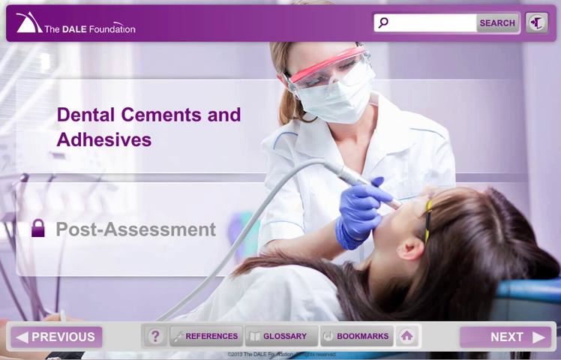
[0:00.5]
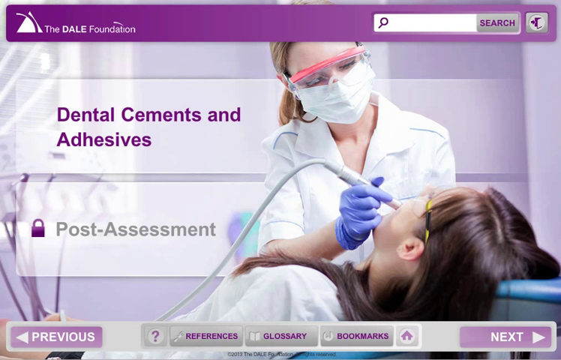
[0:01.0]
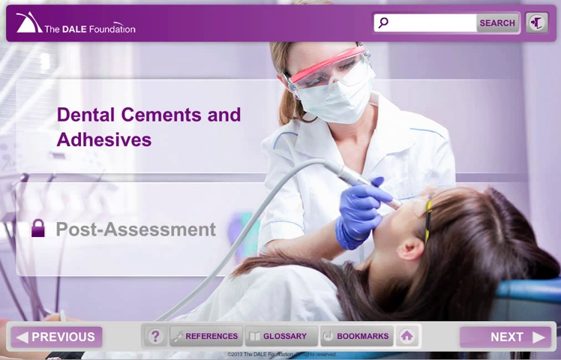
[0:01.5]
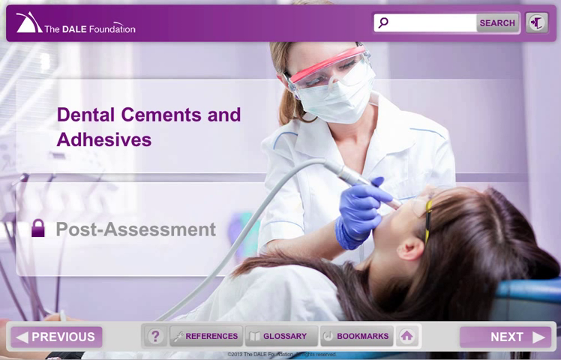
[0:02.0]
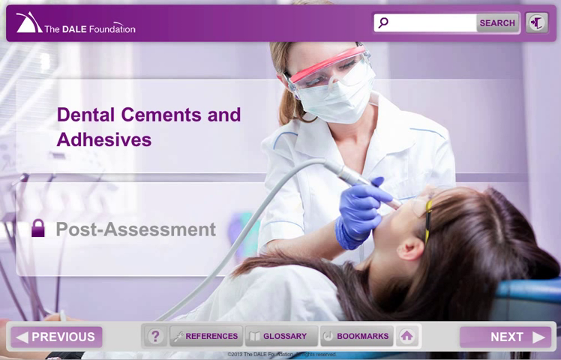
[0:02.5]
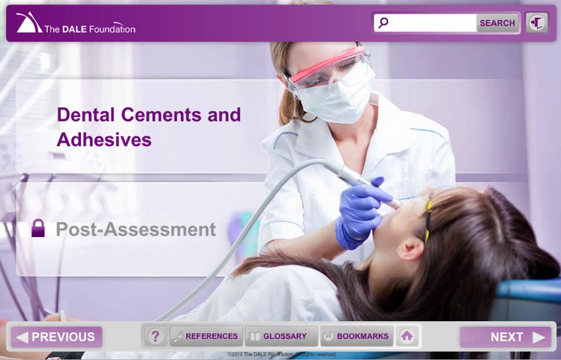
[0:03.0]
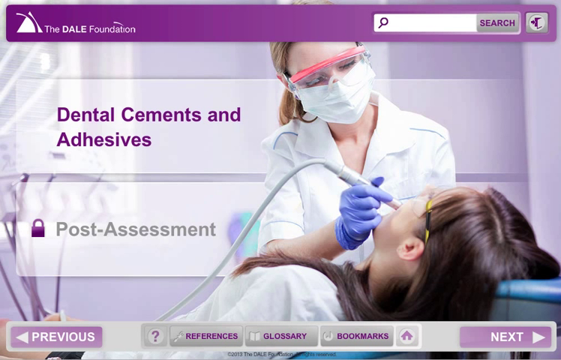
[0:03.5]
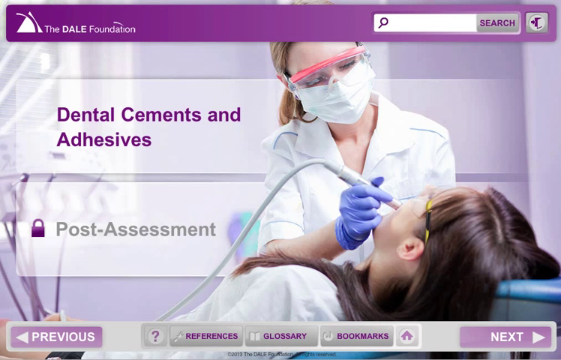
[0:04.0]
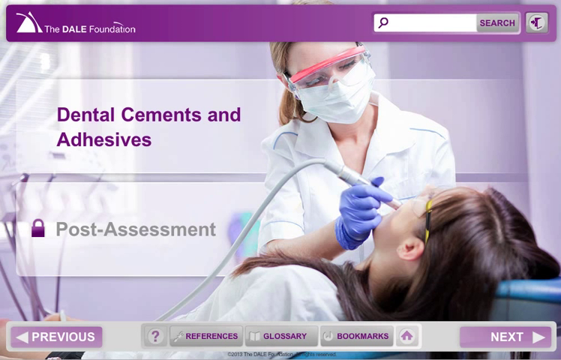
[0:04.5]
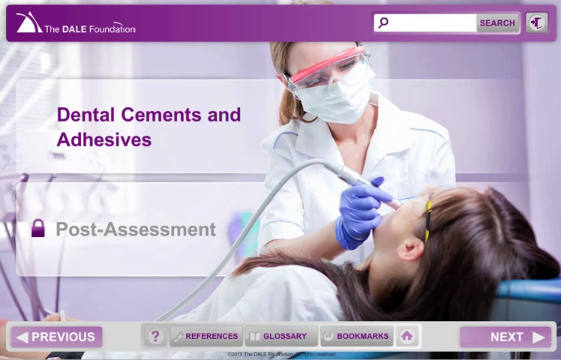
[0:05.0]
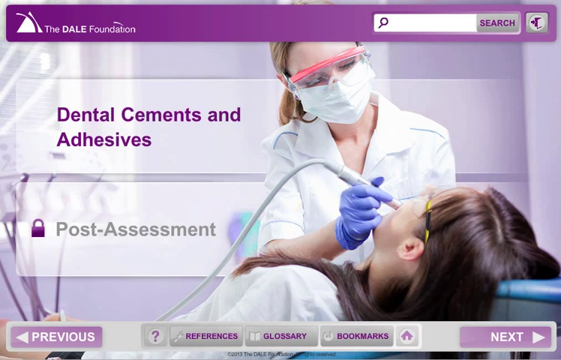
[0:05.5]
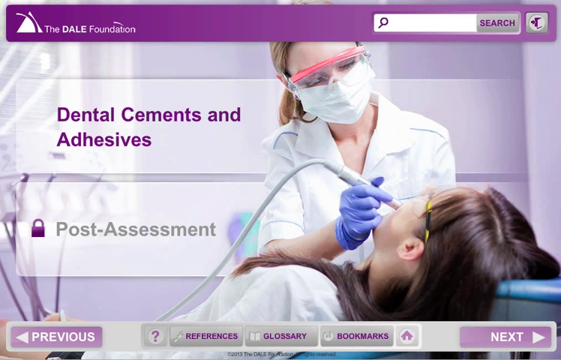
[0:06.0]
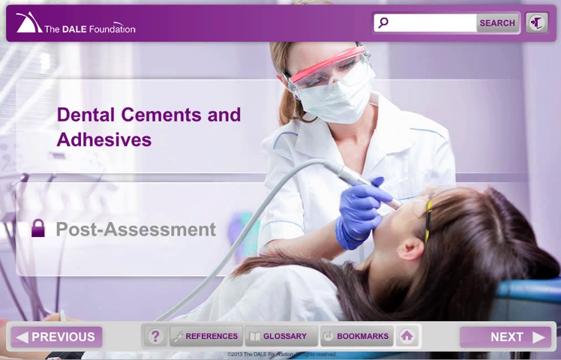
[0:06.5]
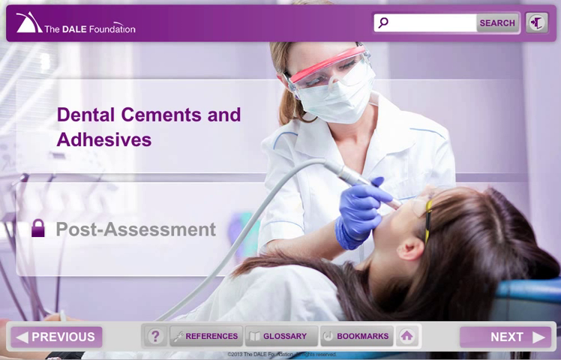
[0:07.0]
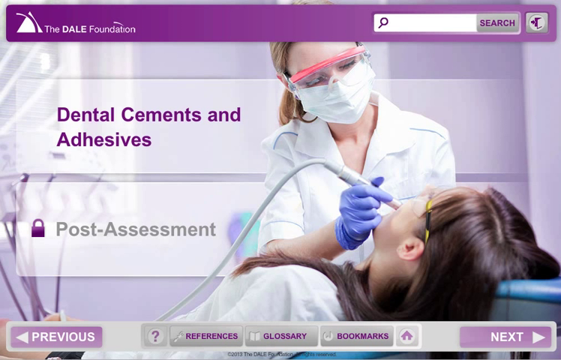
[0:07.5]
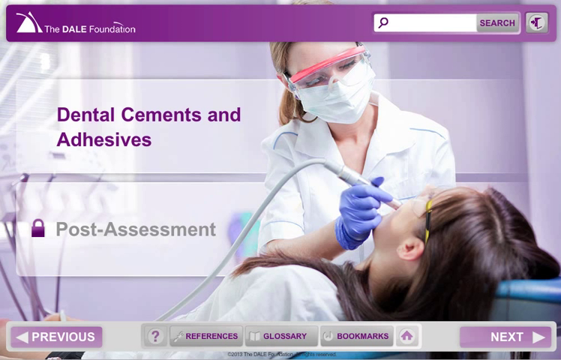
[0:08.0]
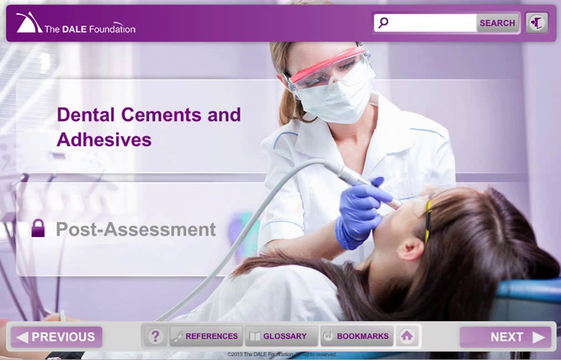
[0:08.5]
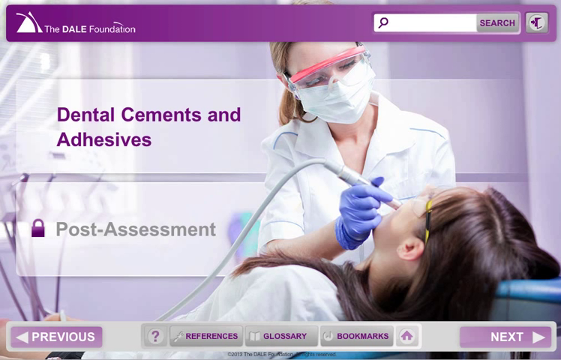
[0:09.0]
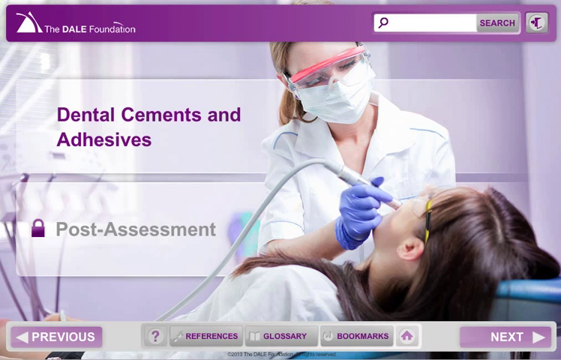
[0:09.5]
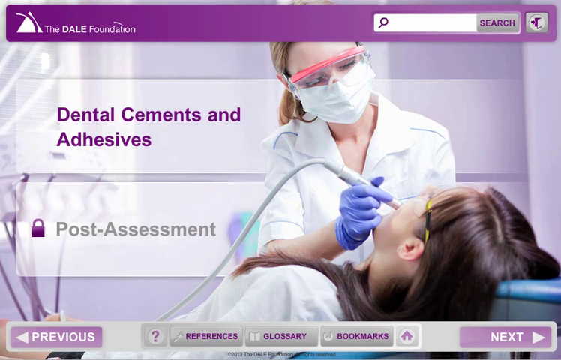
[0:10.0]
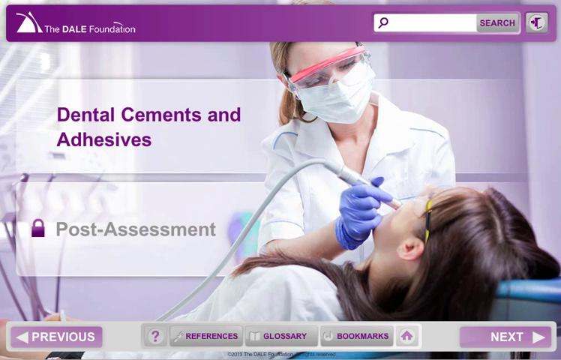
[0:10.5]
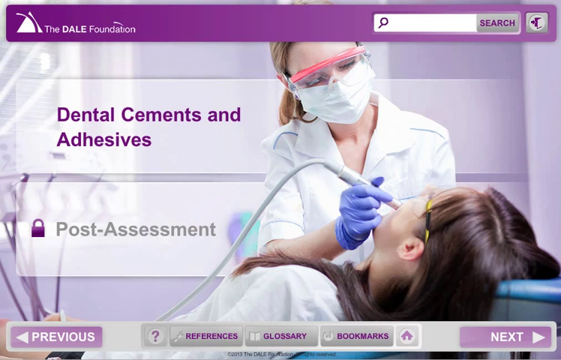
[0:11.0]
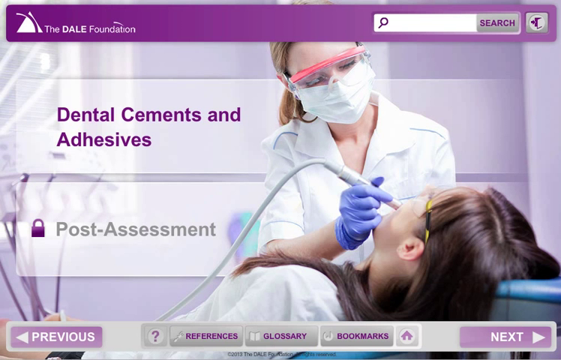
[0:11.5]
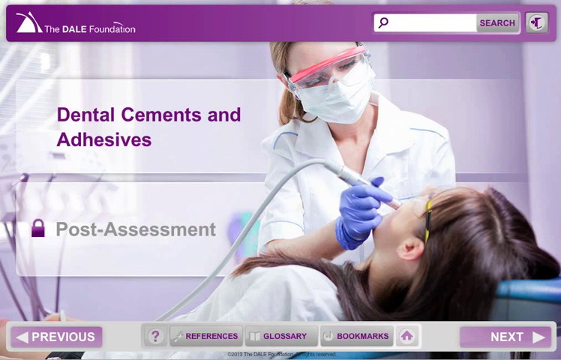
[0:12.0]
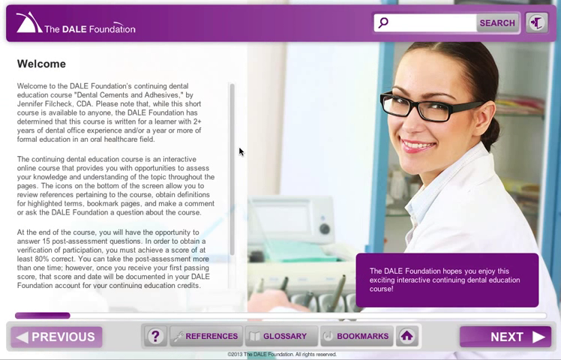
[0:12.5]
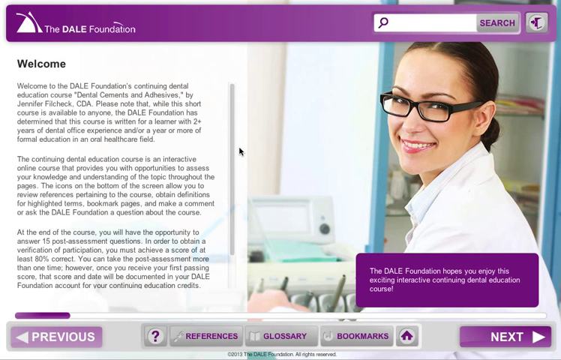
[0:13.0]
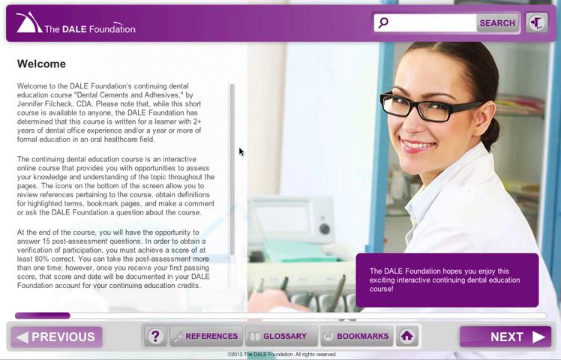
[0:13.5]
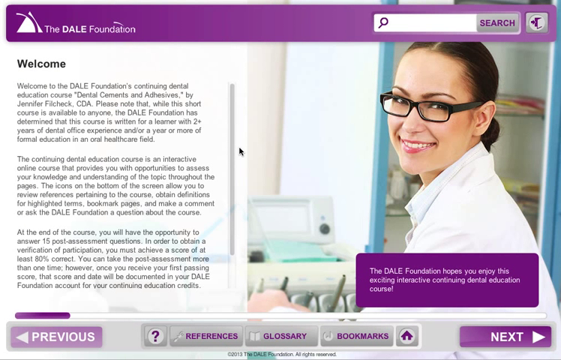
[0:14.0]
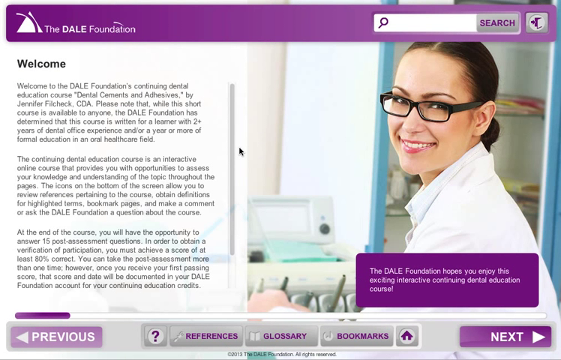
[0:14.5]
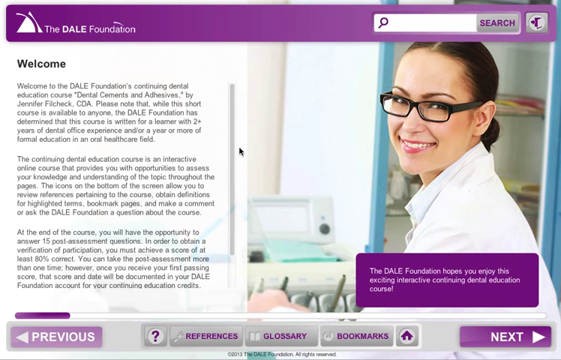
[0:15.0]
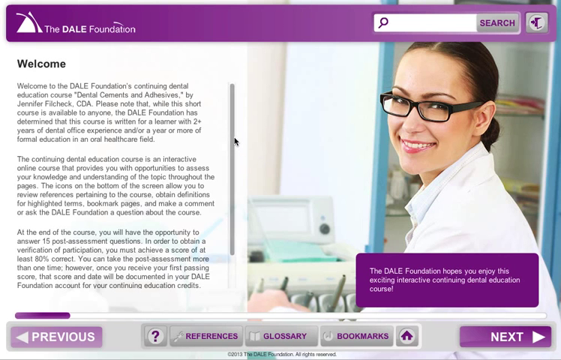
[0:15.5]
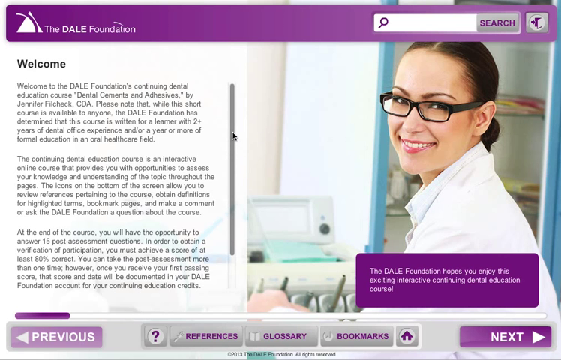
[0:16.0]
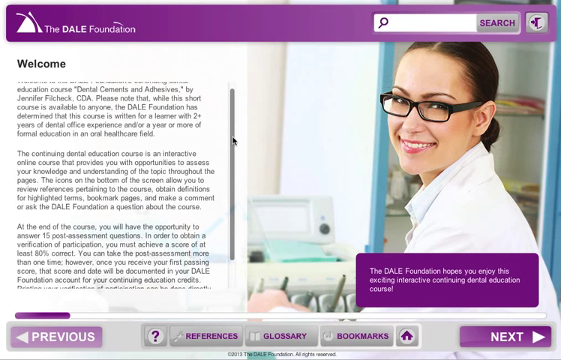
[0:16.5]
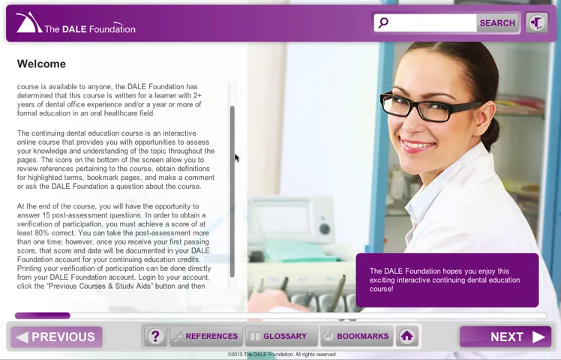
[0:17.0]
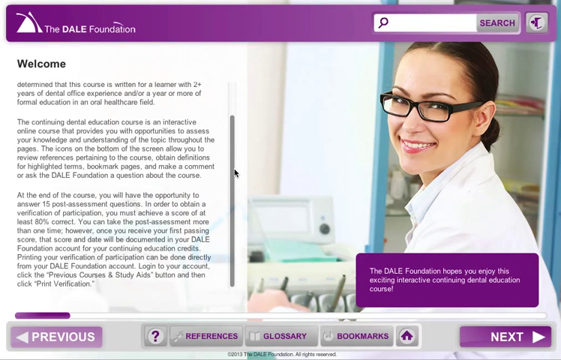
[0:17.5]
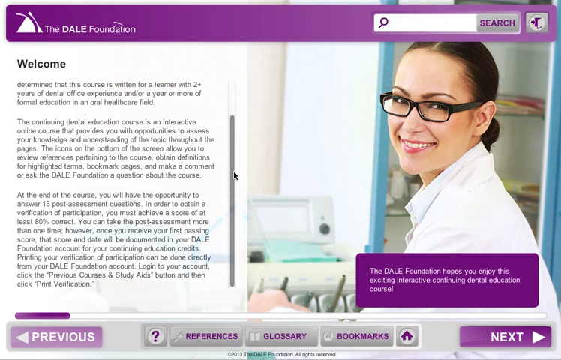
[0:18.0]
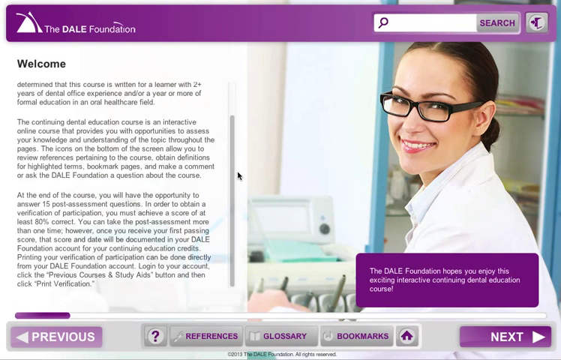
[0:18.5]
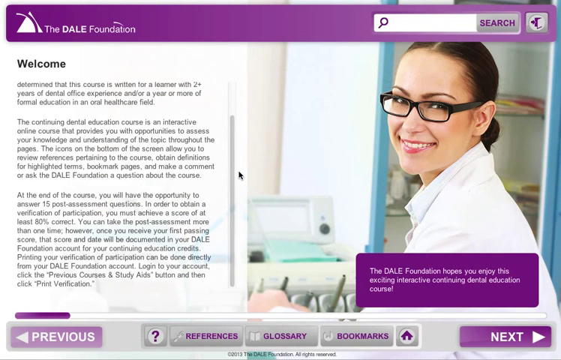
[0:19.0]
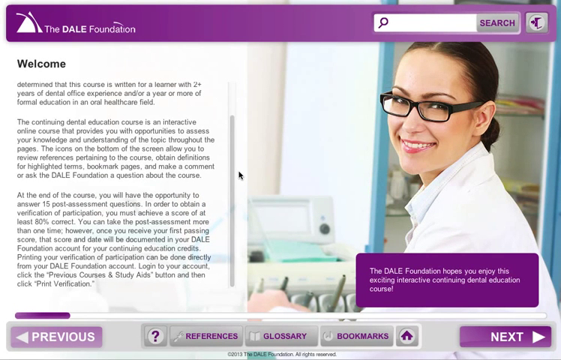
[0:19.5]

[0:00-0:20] The video opens on an image of a dentist performing a procedure on a patient, which serves as the background for the website; it looks like a homepage for a website or a PowerPoint presentation. Across the top of the screen, white text on a purple background reads "the Dale Foundation". In the top right corner is a search bar: a white box for typing text, with a little purple magnifying glass on the left and "search" in purple on the right. A title reads "dental cements and adhesives", with "post-assessment" and a padlock underneath. Beside that is the image of the dentist, who wears protective goggles, a mask, a white uniform and blue gloves, with her hair tied back. She holds a piece of equipment in the mouth of a patient who has dark hair, also wears goggles, and is lying on the bed in front. The next image shows a woman who could be a dentist, wearing black glasses, with her dark hair tied up. Text to the left reads "welcome to the Dale Foundation's continuing dental education course", followed by more information.